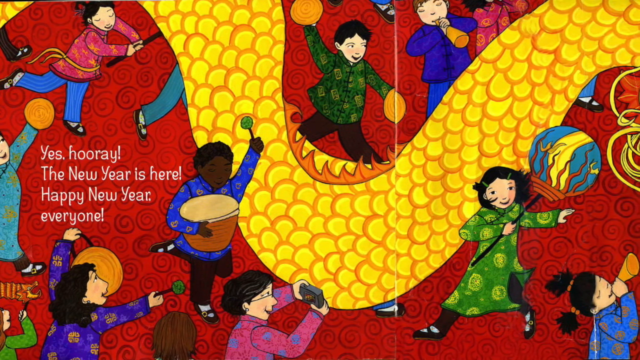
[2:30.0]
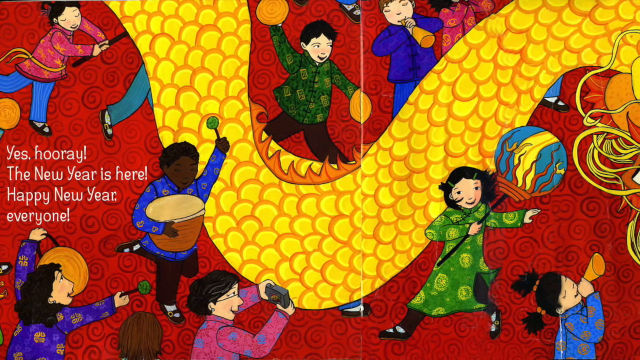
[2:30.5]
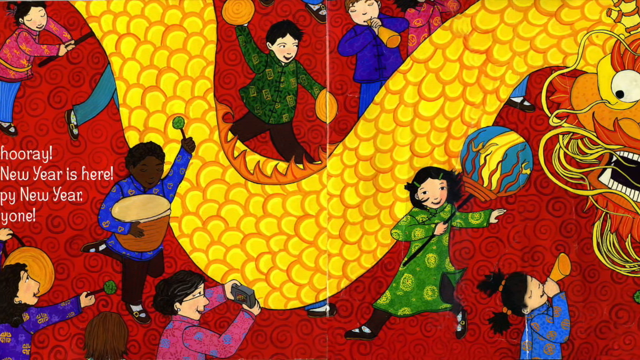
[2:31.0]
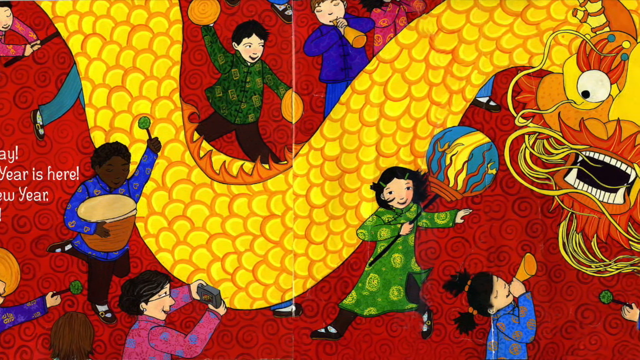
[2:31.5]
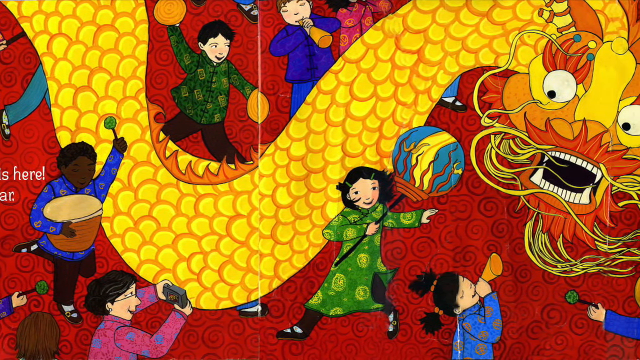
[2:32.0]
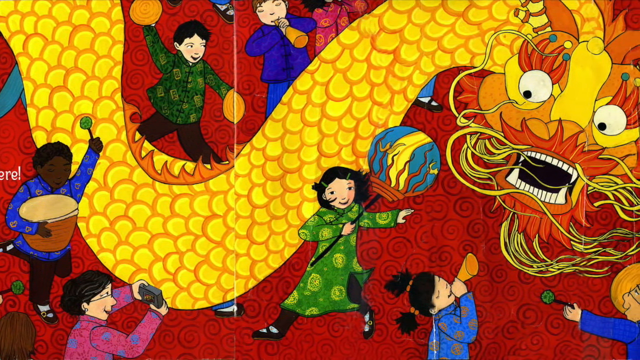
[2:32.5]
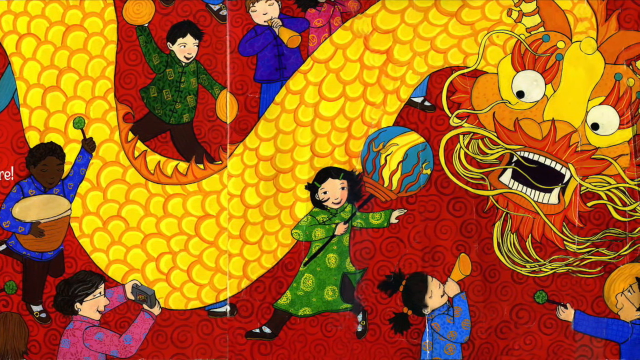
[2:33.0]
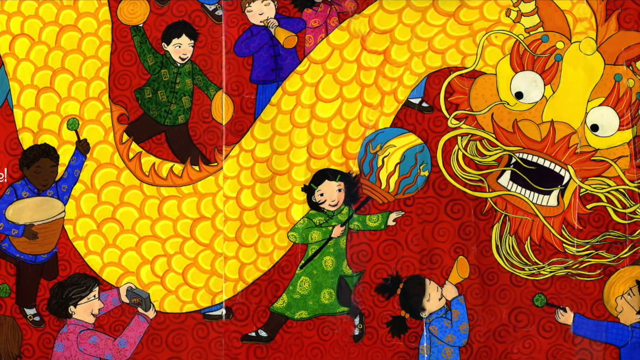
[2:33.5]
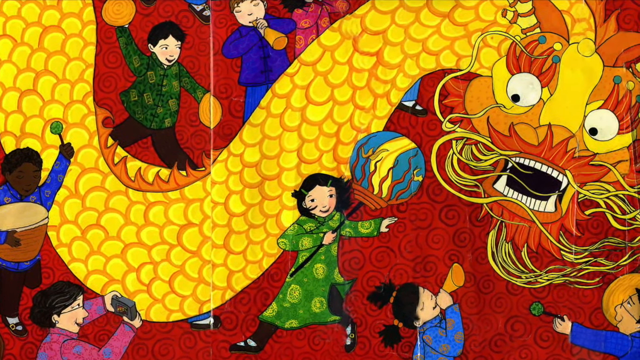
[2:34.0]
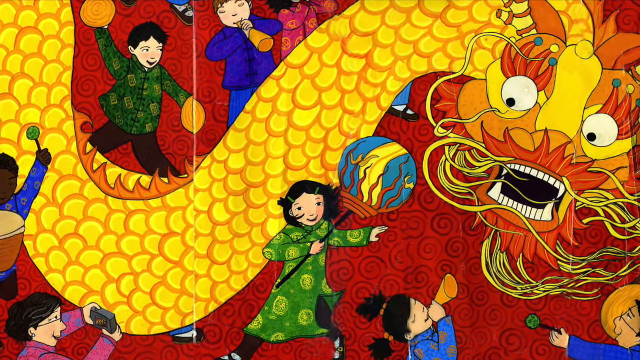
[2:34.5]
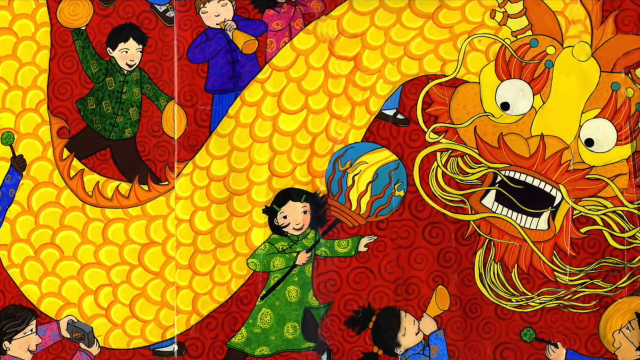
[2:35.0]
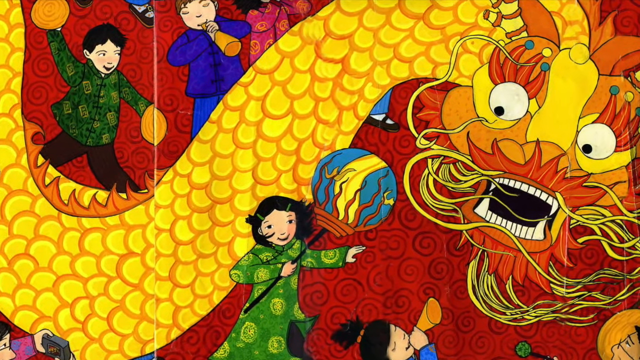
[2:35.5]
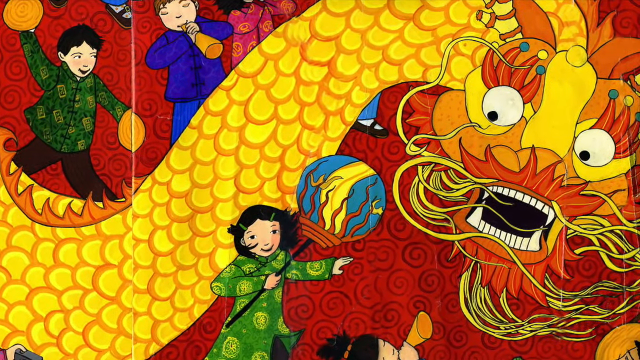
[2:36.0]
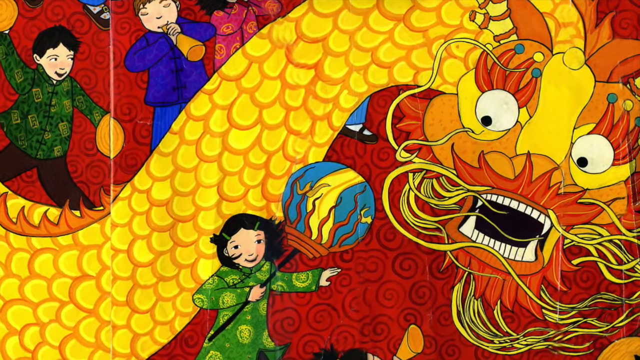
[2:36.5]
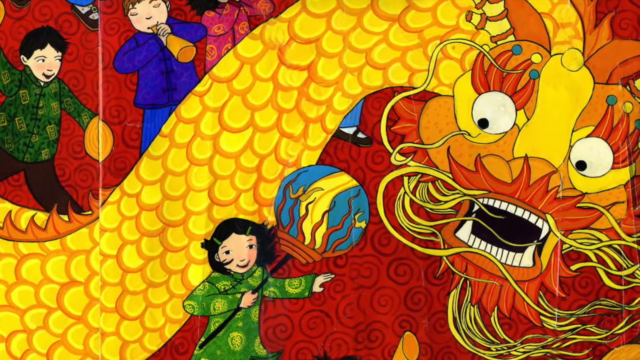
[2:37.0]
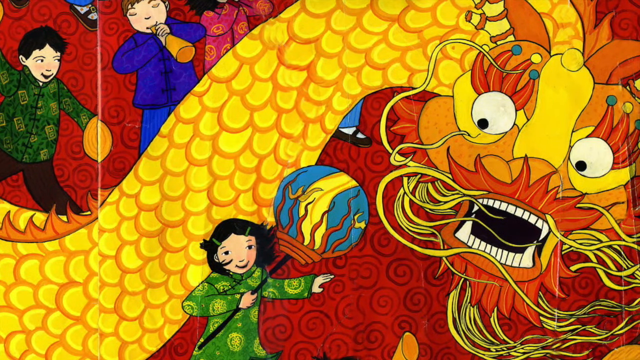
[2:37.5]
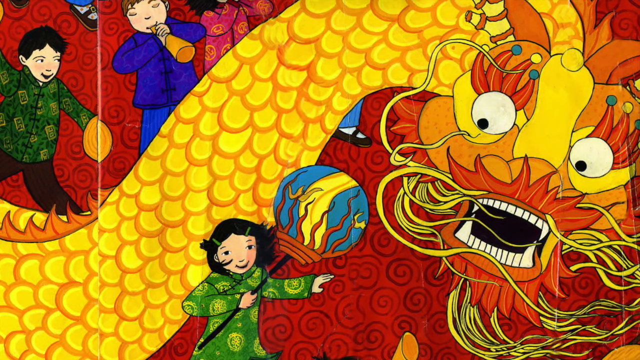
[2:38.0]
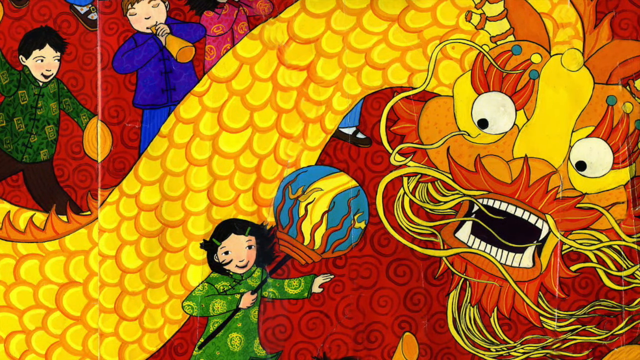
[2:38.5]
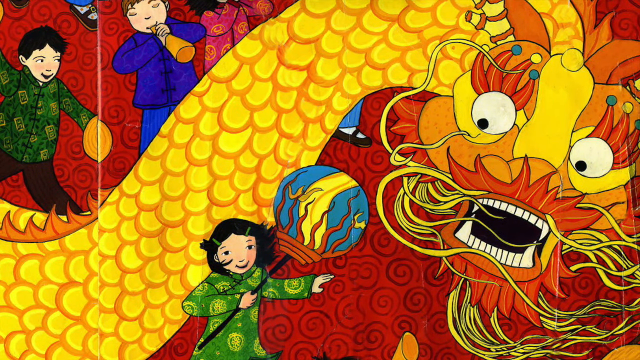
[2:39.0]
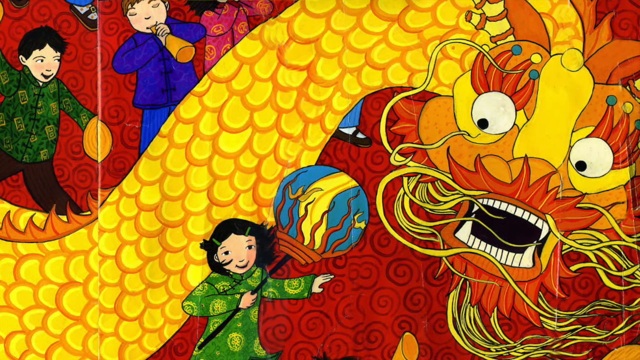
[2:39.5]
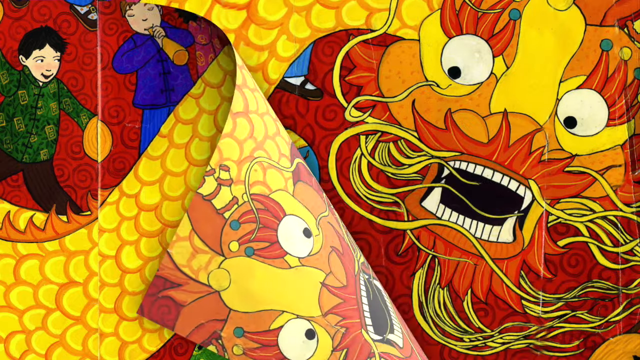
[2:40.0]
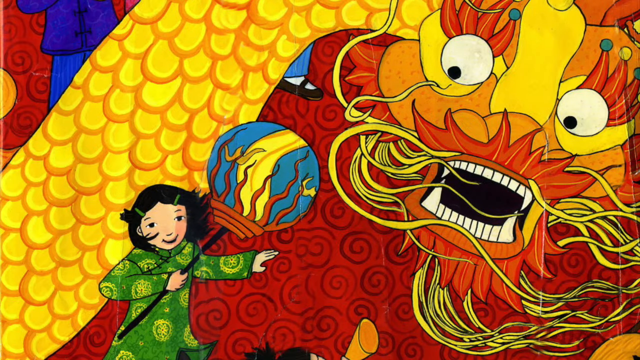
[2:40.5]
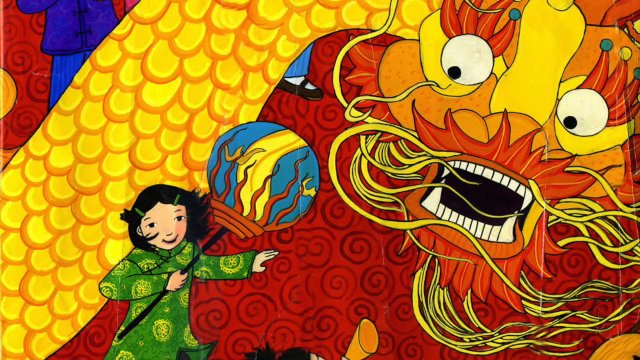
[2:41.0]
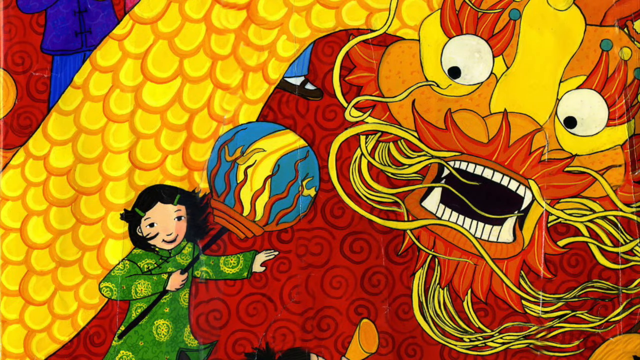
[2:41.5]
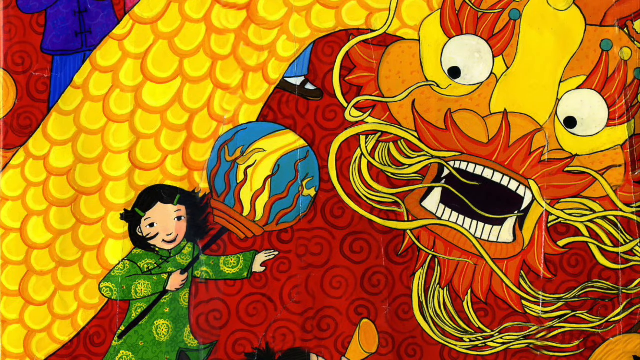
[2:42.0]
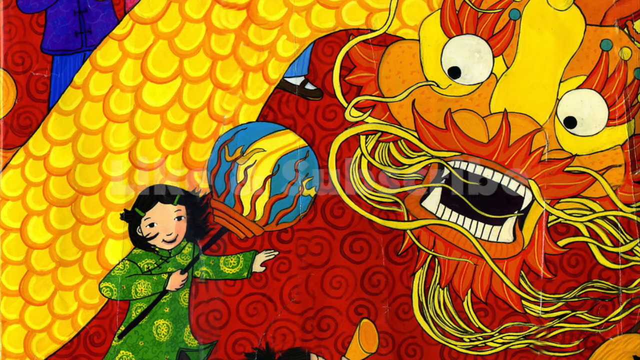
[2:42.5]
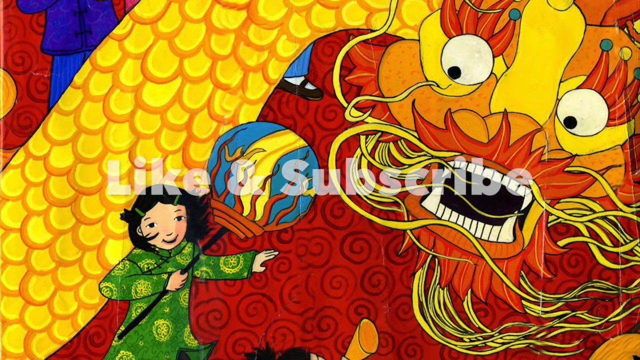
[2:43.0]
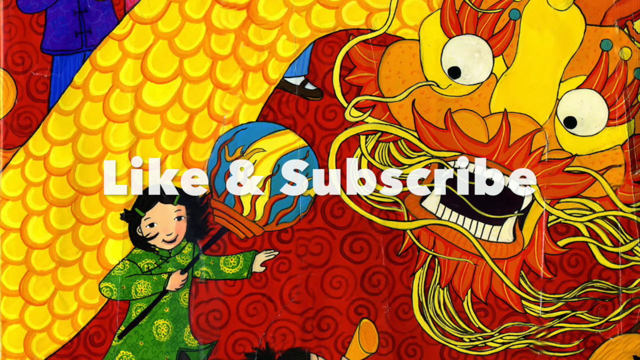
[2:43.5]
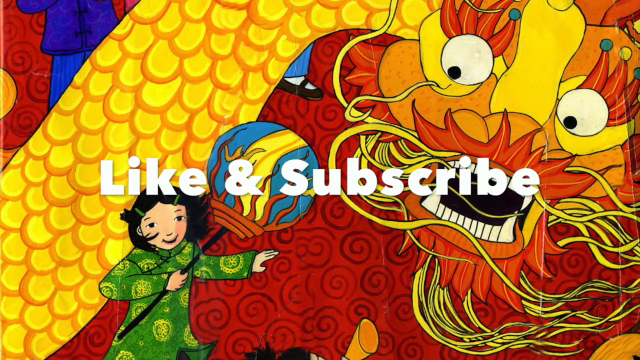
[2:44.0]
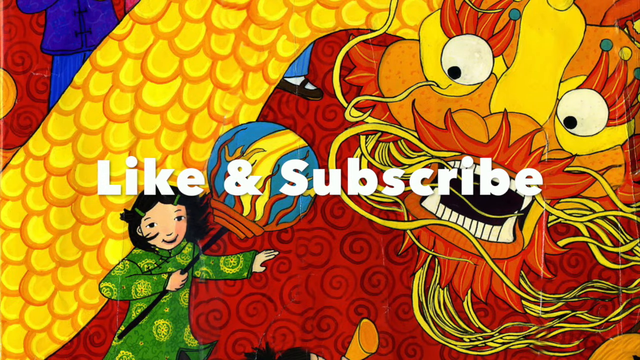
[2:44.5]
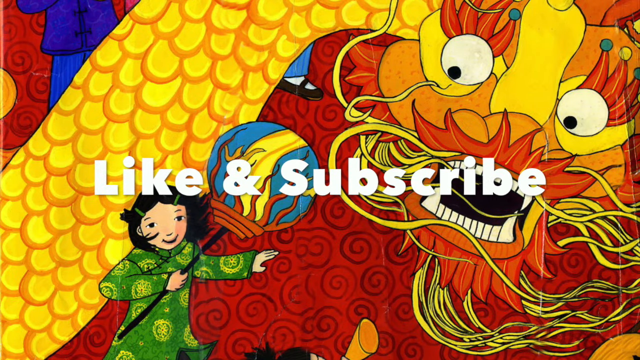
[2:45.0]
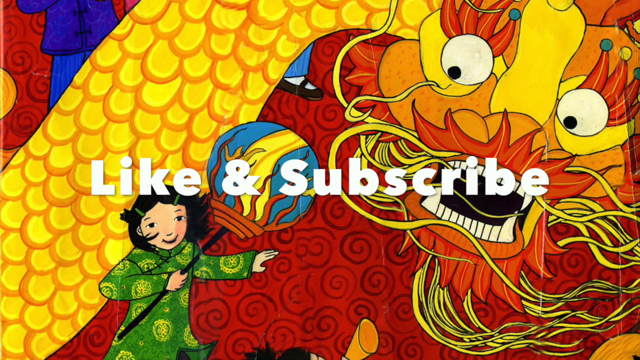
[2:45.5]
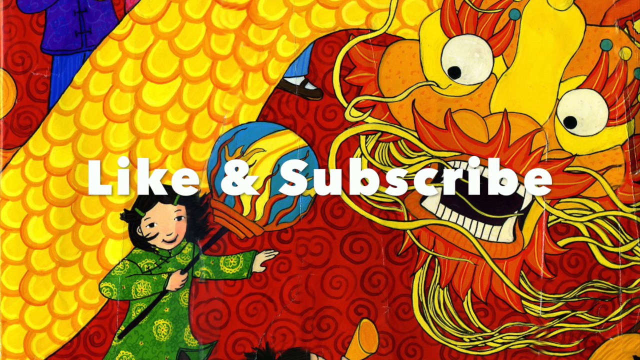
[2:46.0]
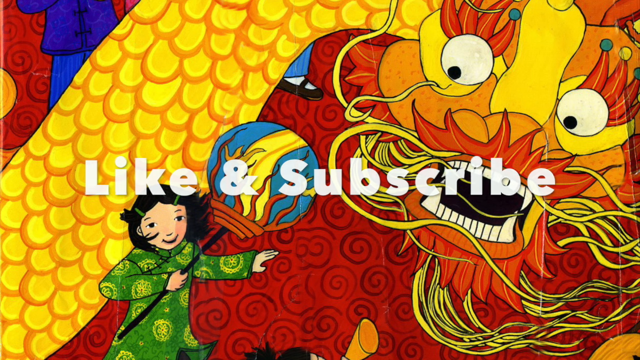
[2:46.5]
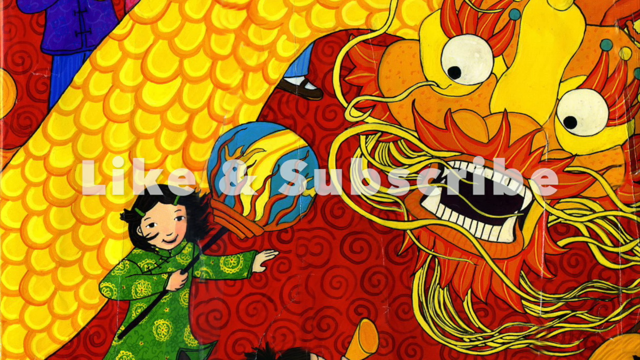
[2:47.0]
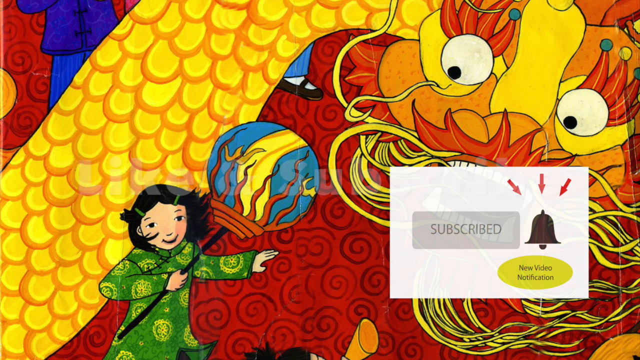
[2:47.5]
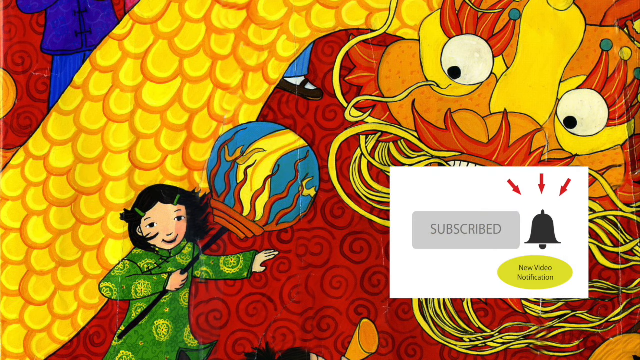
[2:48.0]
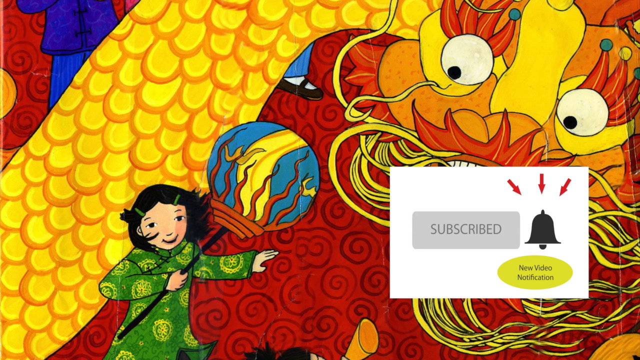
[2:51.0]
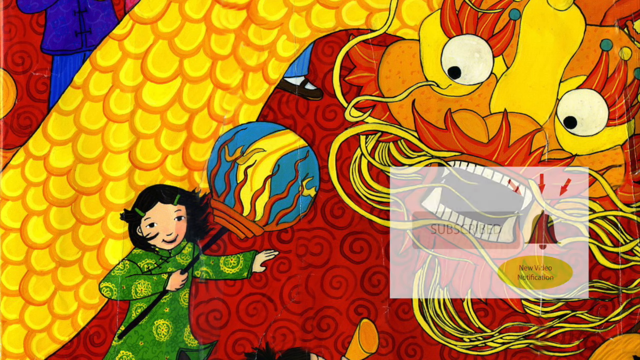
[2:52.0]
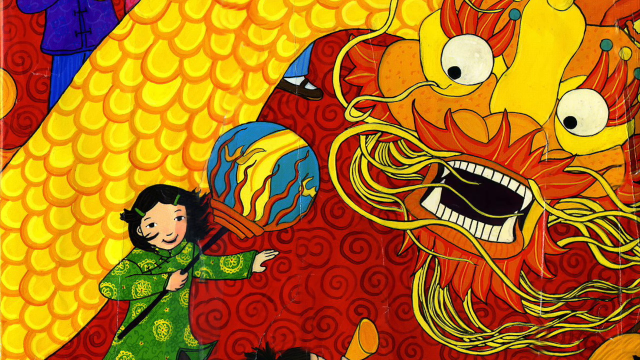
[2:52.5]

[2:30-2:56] People run around, celebrating and taking pictures with the body of the New Year's dragon. On the left the text reads "yes, hooray, the New Year is here. Happy New Year, everyone." To the right, a girl holds a fancy lantern. As the view pans right, it reveals the dragon's face, which looks extremely surprised at the lantern, as if it might possibly hurt it. The view zooms in on the dragon's face and stays there for a while; it seems to turn the page, but the same image of the dragon's face and the child holding the lantern remains. The words "like and subscribe" slowly appear over the image. Then a small image appears that says "subscribe", with a bell and three red arrows pointing toward the bell, and underneath it an orange-yellow oval that says "new video notification". It then disappears.